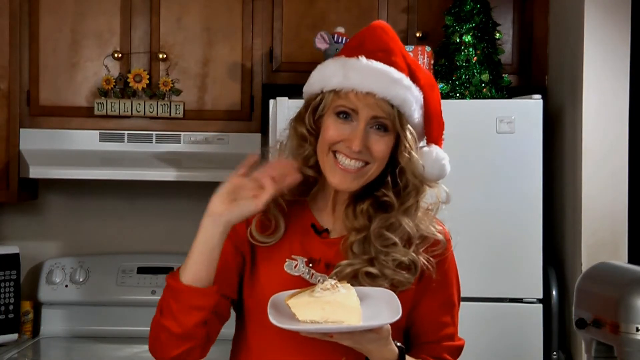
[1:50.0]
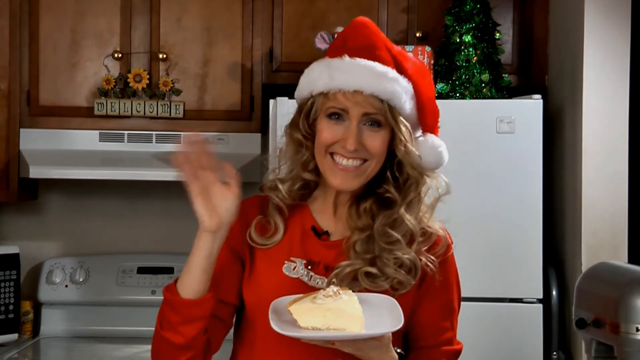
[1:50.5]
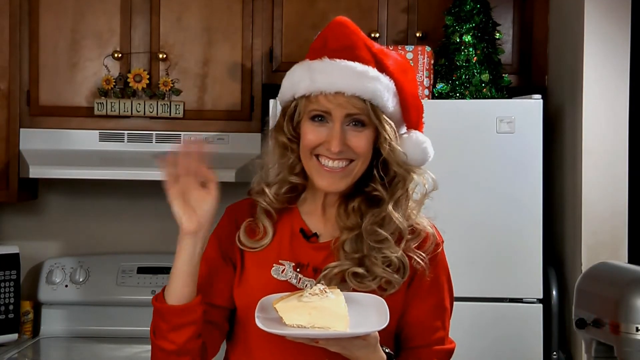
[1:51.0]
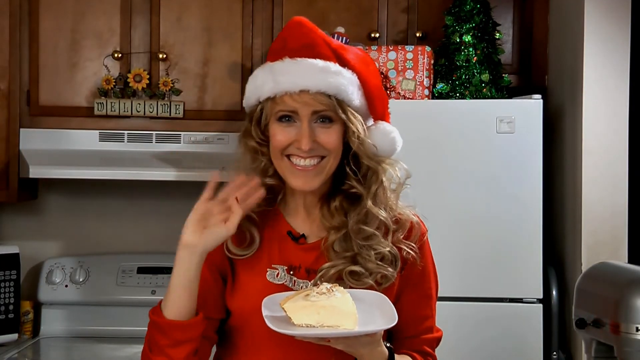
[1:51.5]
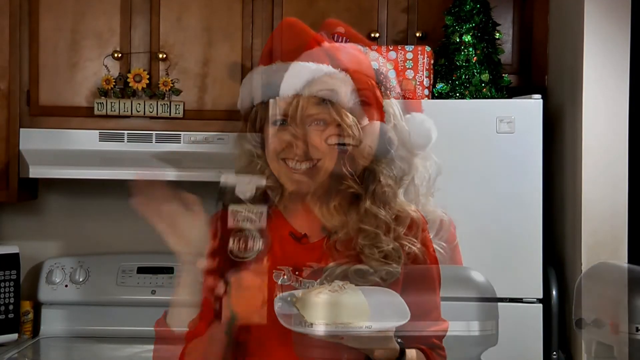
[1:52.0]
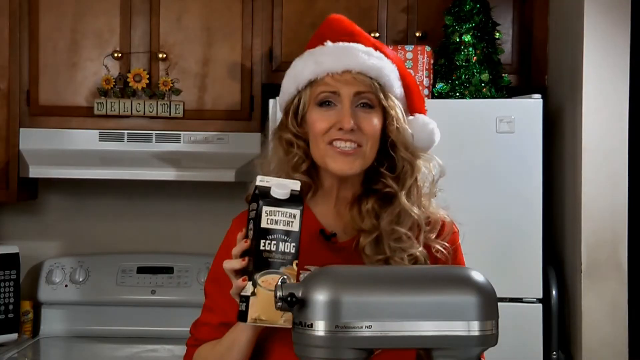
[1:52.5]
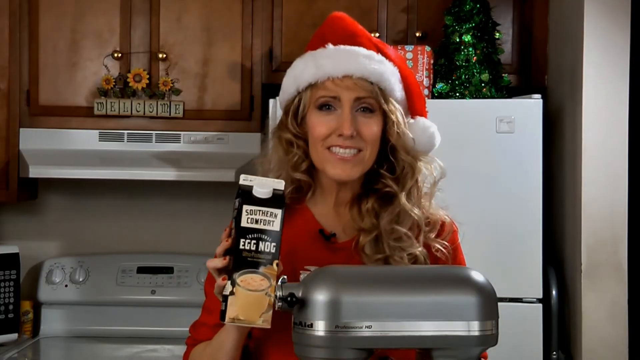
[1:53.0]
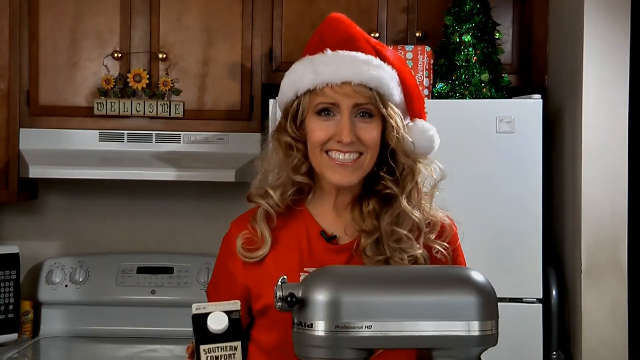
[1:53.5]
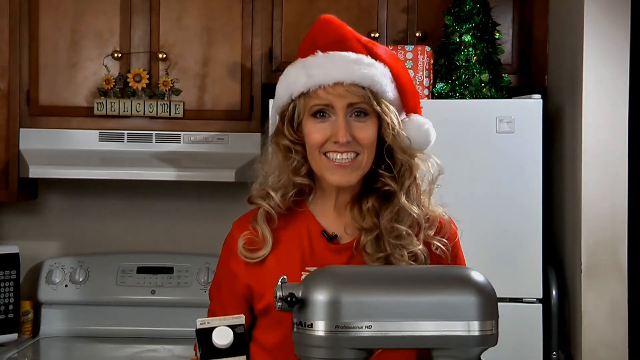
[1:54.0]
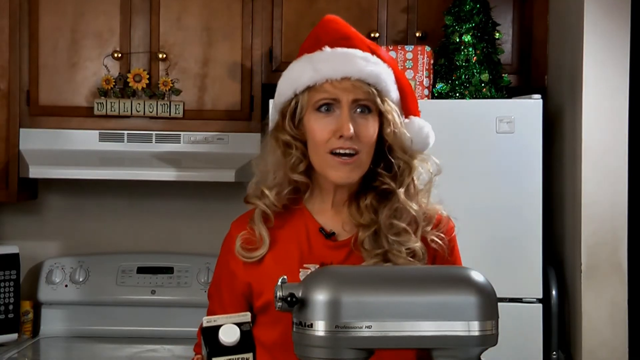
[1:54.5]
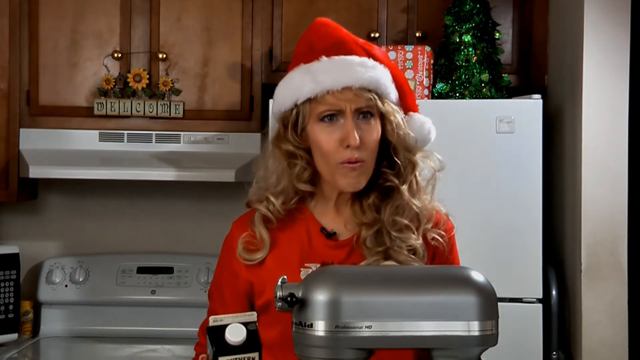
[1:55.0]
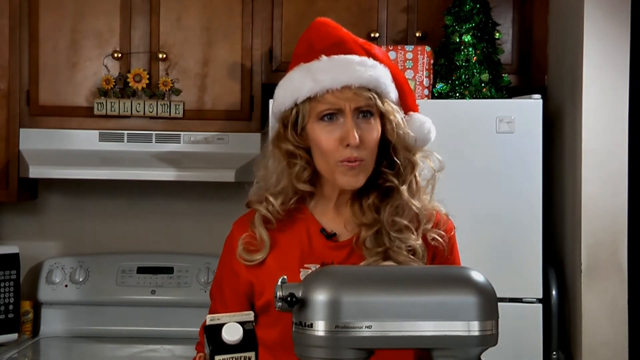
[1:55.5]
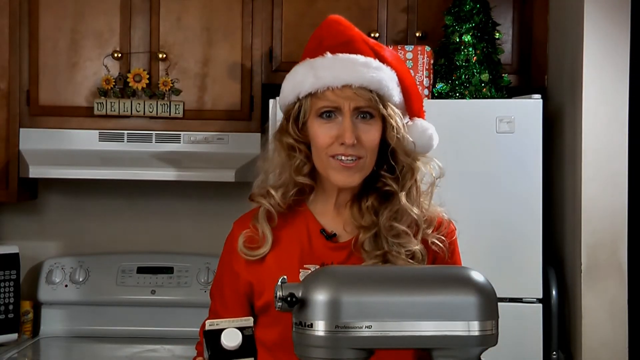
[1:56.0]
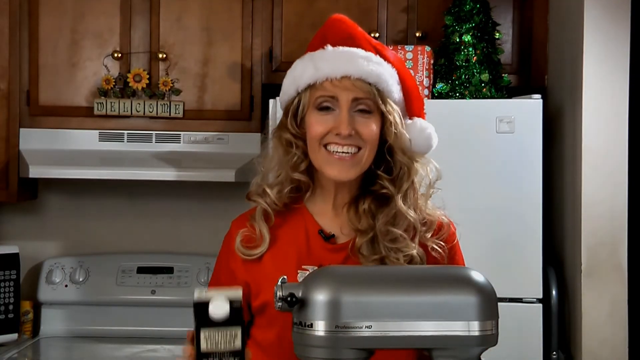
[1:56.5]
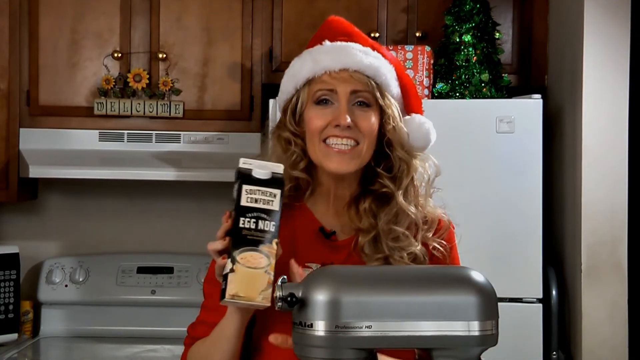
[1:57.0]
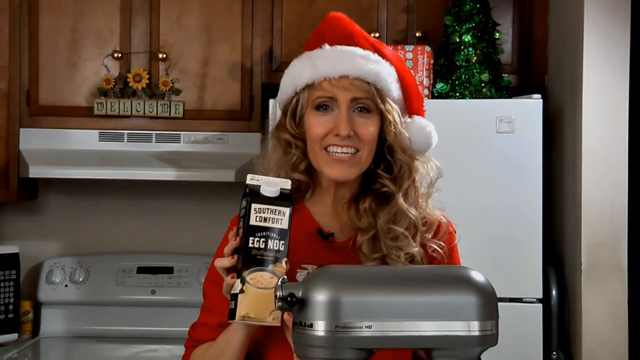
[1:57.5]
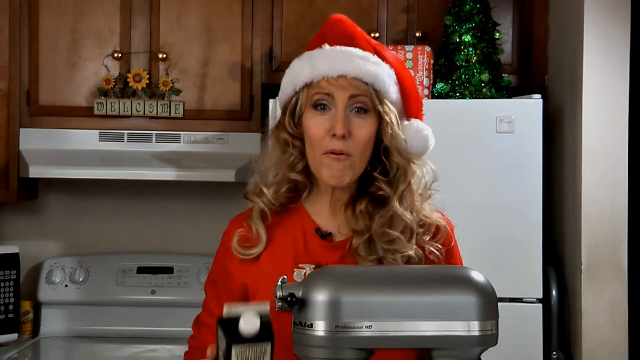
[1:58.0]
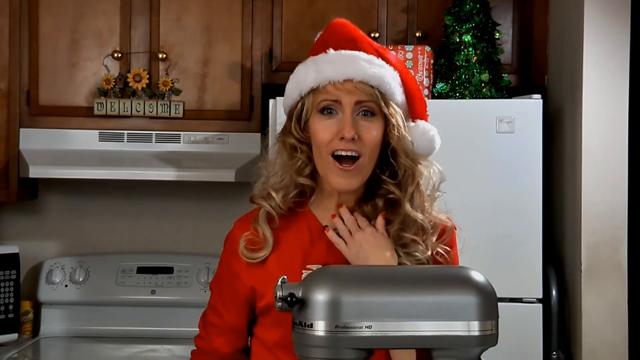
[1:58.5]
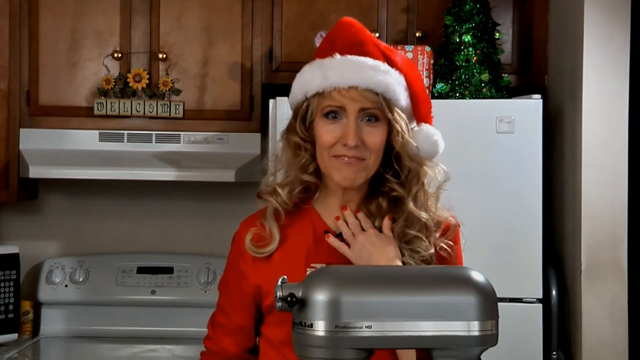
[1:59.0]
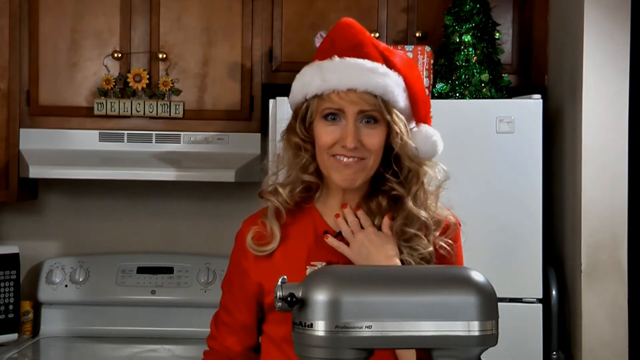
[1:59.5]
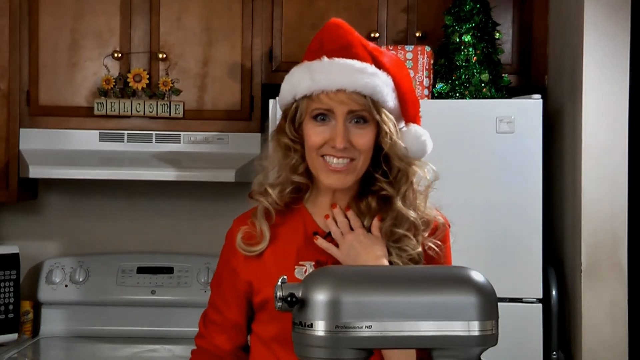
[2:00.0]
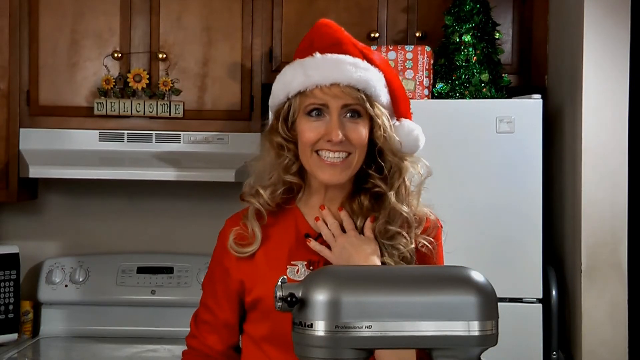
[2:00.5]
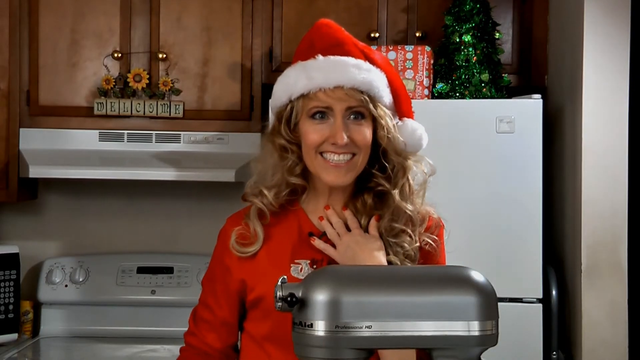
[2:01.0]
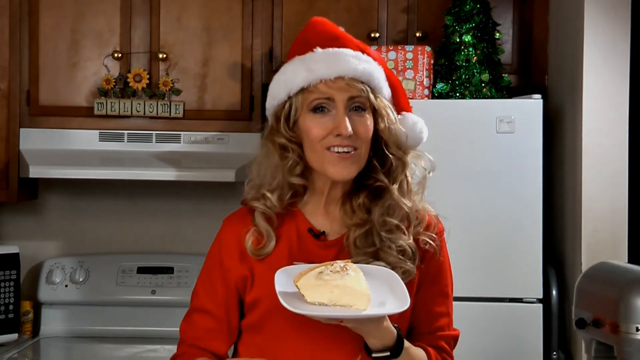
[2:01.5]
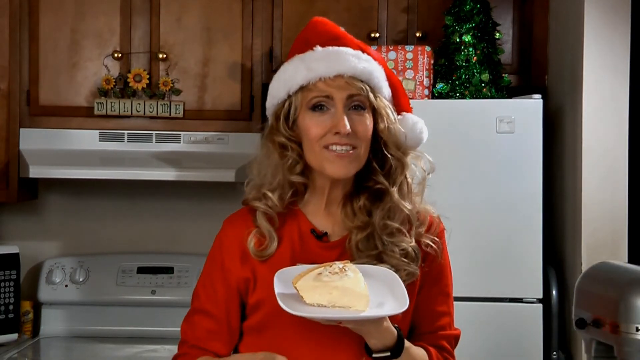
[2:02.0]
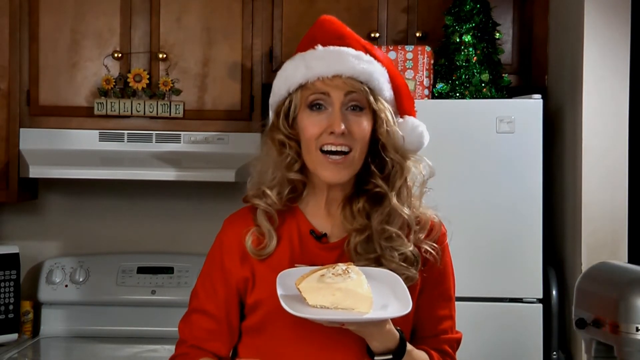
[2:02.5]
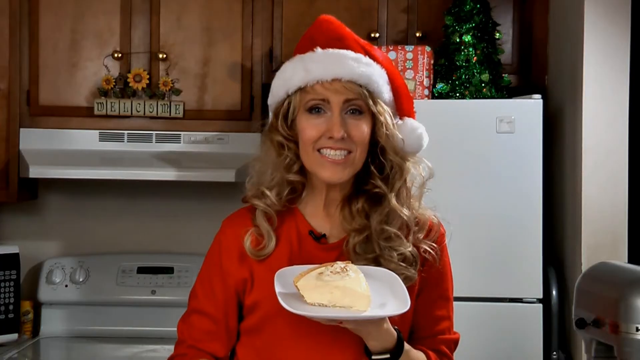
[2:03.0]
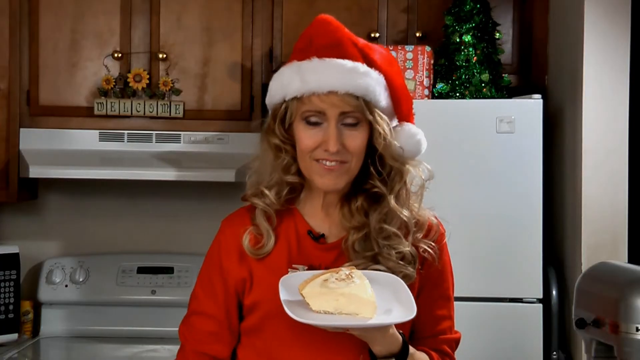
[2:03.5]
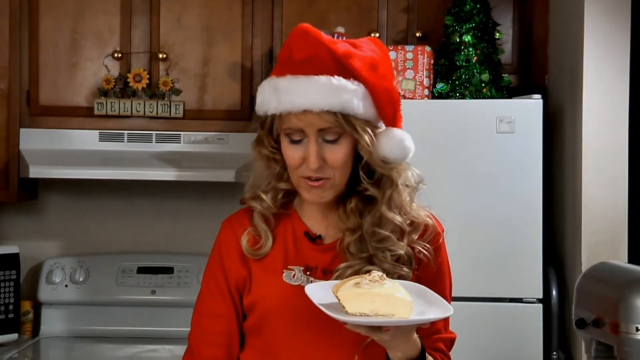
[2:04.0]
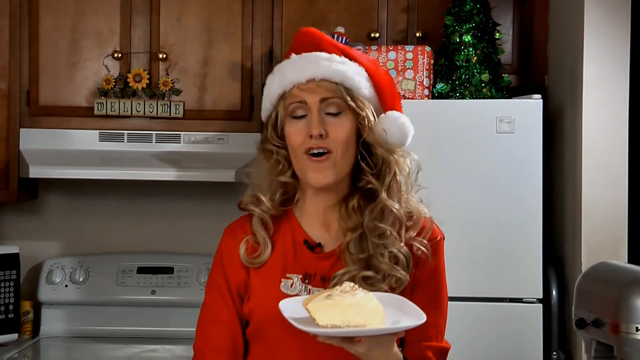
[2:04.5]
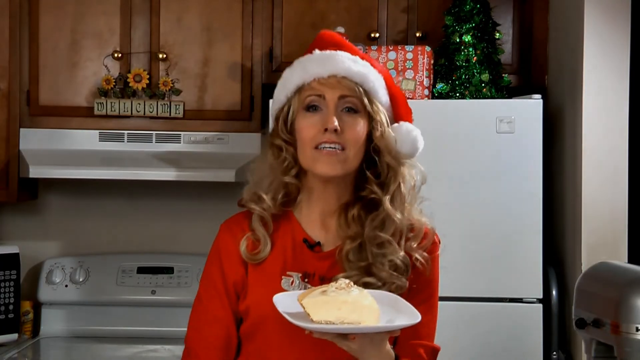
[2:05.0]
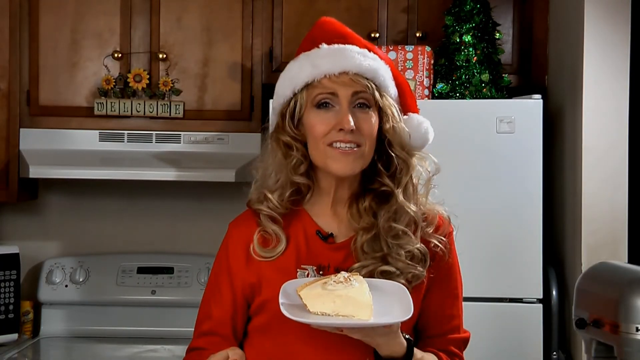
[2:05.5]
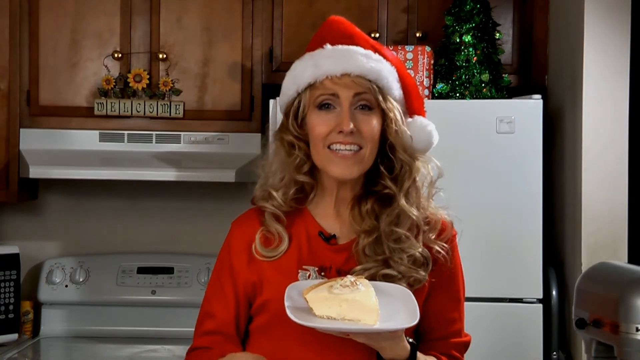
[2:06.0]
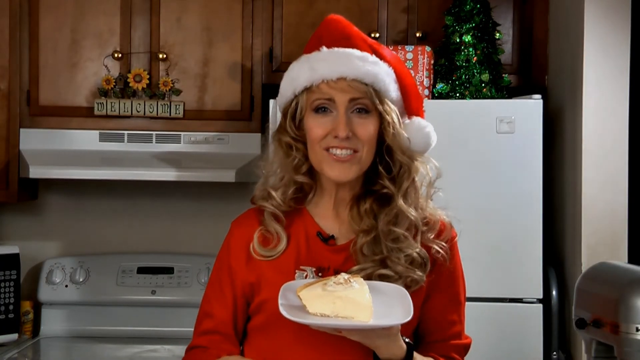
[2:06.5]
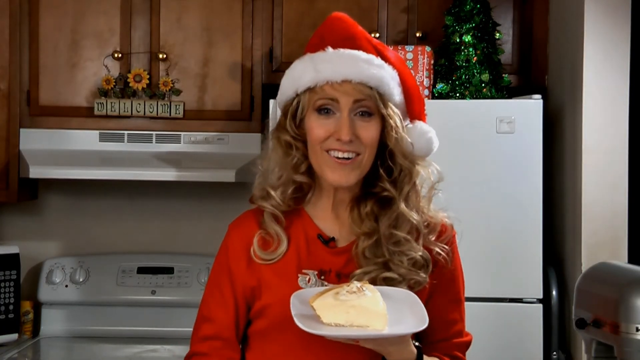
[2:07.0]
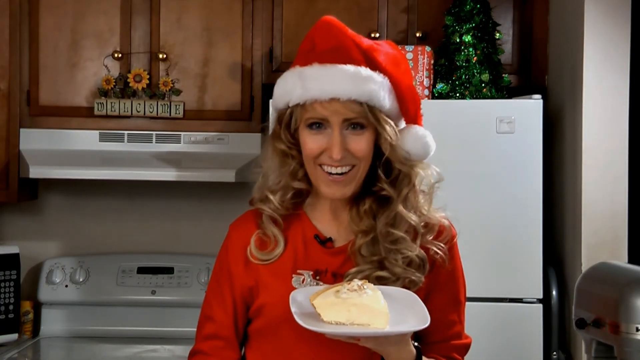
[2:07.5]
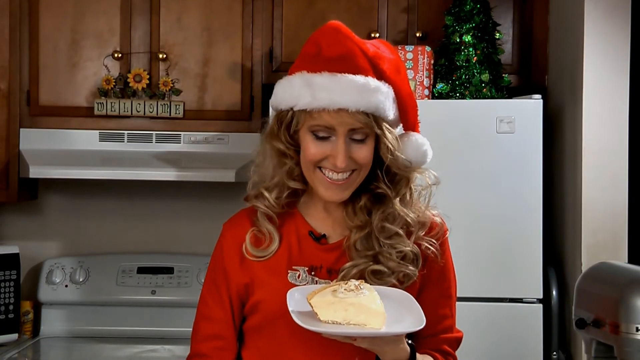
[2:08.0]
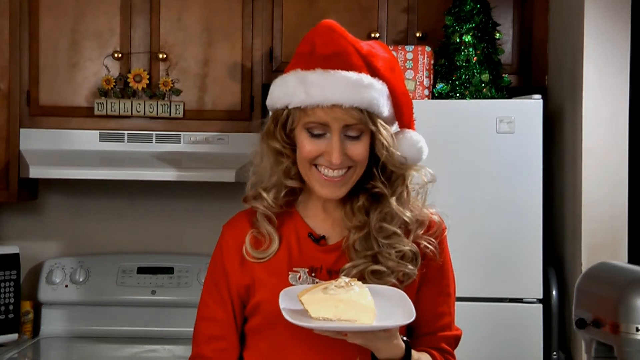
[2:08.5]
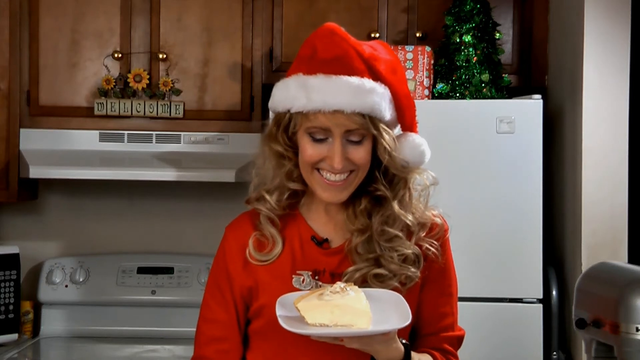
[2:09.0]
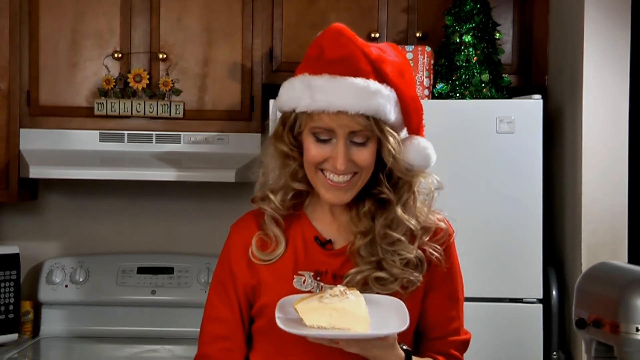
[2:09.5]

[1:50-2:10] The woman waves goodbye, then the video transitions back to her holding the eggnog. She smiles and talks, looks a little stressed, then goes right back to smiling and puts her right hand on her chest. The video then skips from her holding the eggnog to her holding the finished pie, as if it were sped up or cut. She seems very happy while talking. She is a very skinny, fit woman. The hat is still on her head and everything looks about the same.